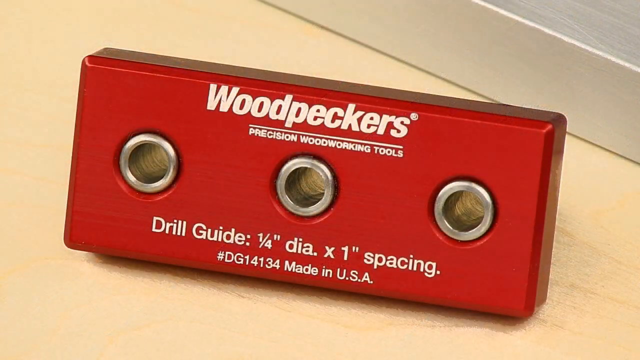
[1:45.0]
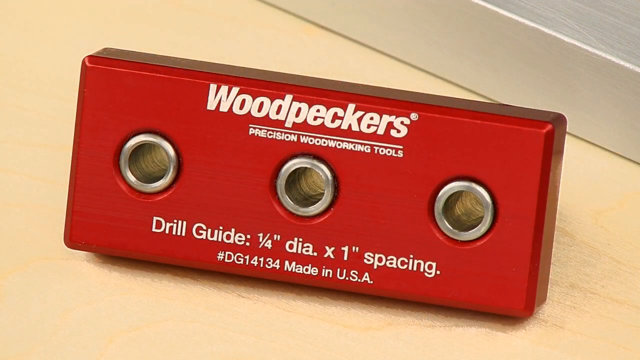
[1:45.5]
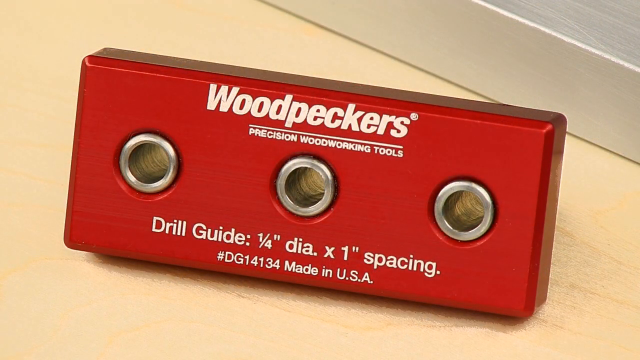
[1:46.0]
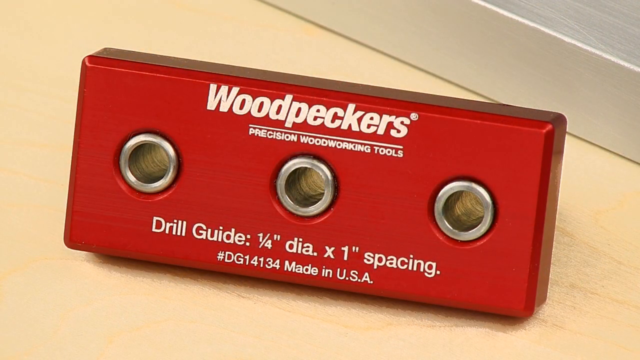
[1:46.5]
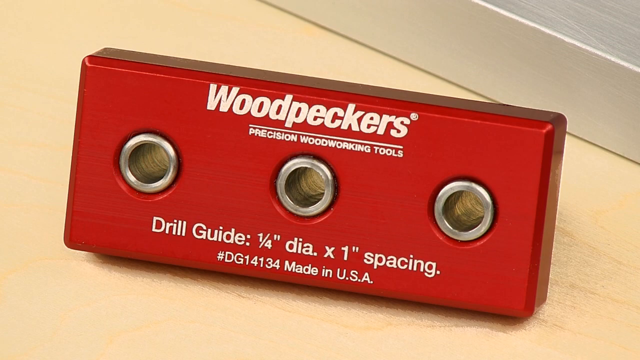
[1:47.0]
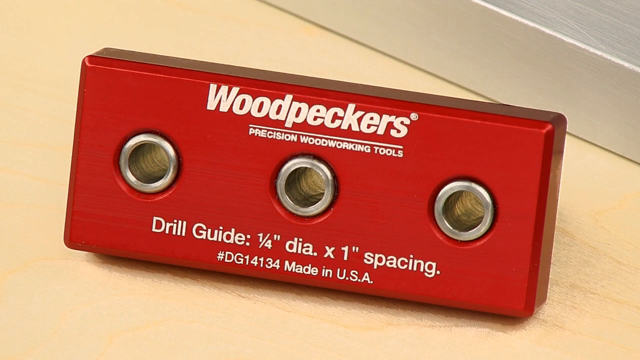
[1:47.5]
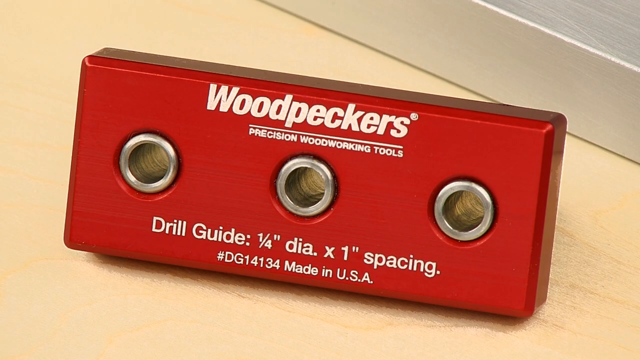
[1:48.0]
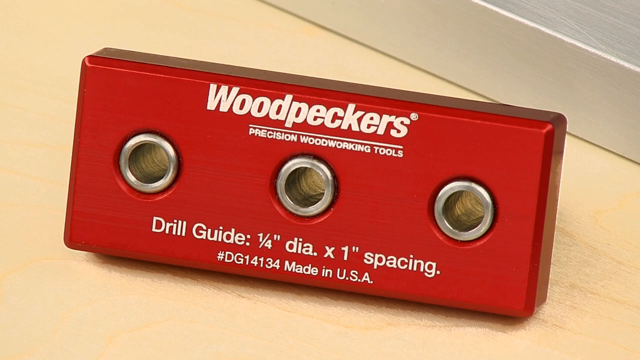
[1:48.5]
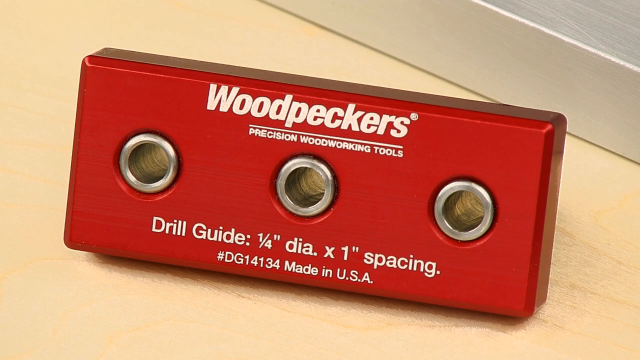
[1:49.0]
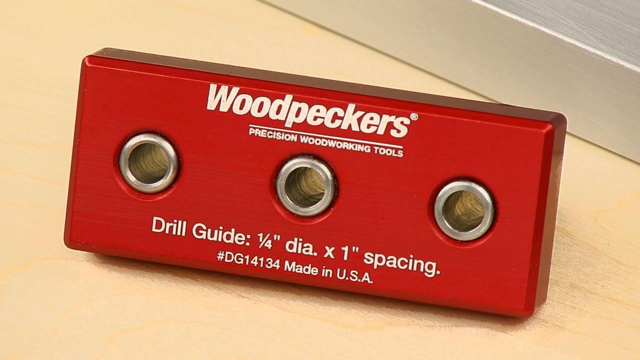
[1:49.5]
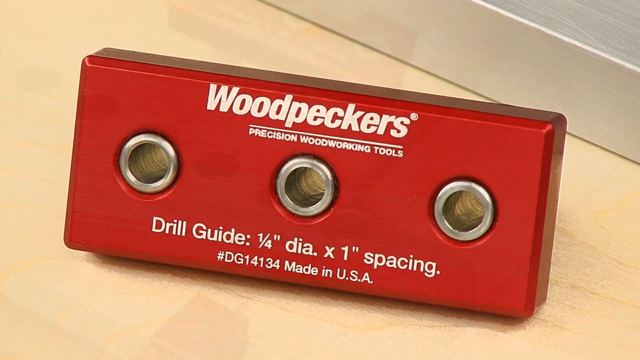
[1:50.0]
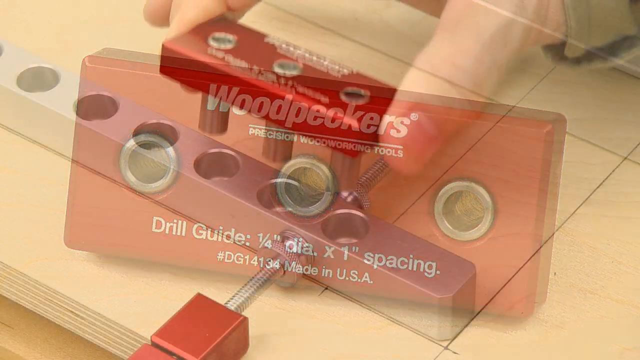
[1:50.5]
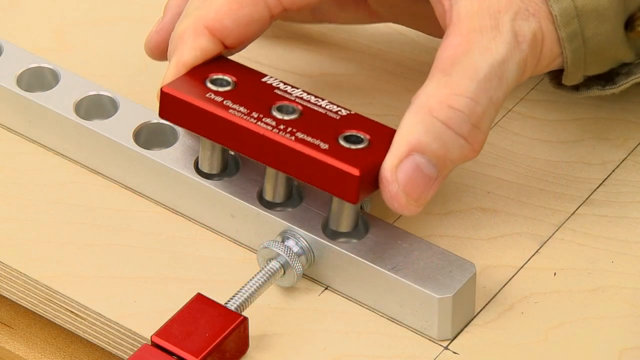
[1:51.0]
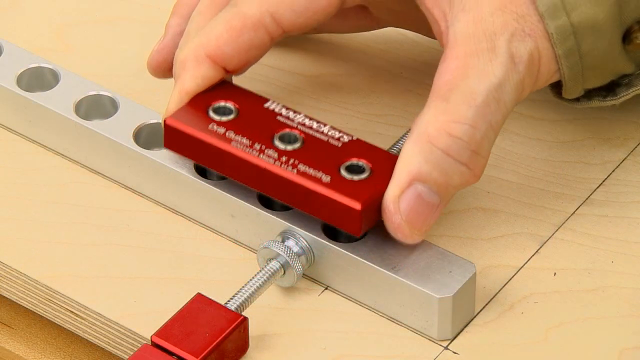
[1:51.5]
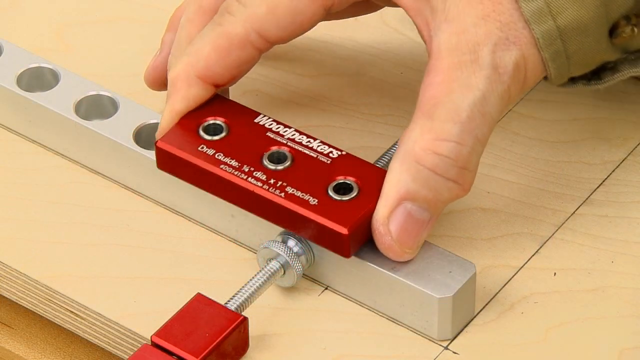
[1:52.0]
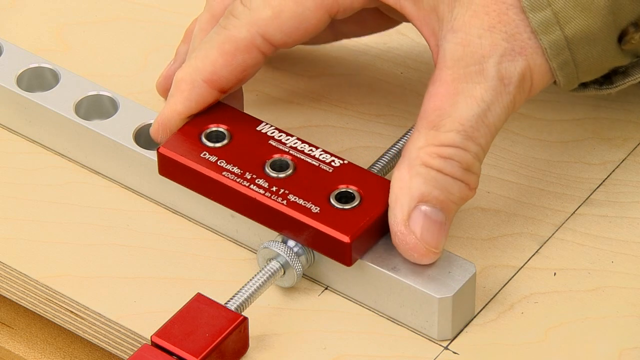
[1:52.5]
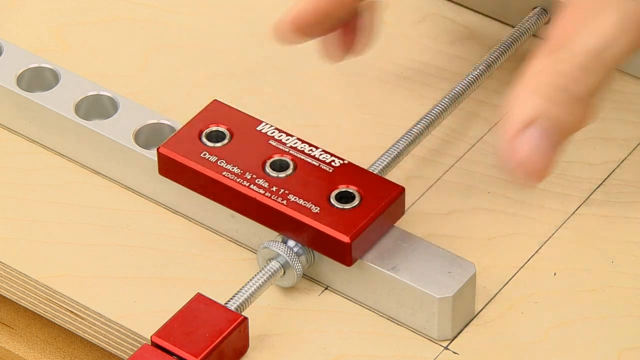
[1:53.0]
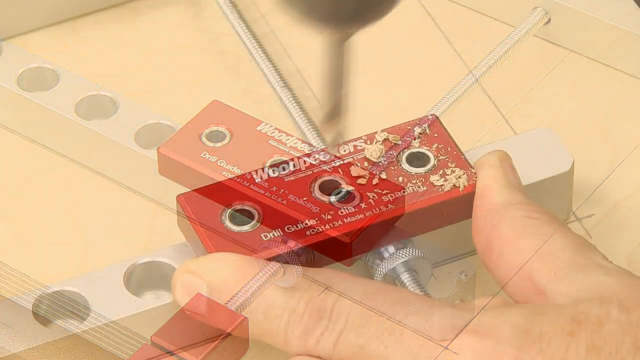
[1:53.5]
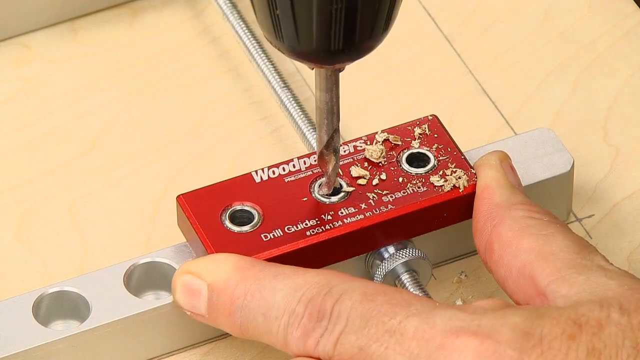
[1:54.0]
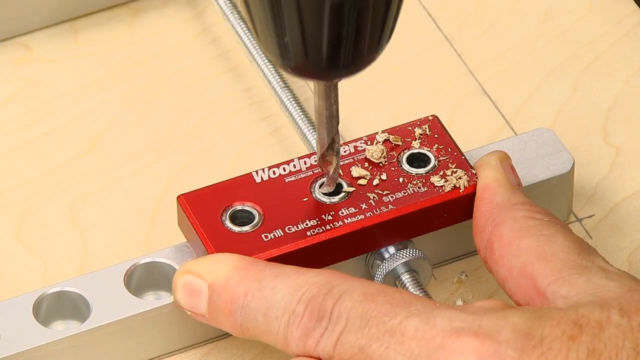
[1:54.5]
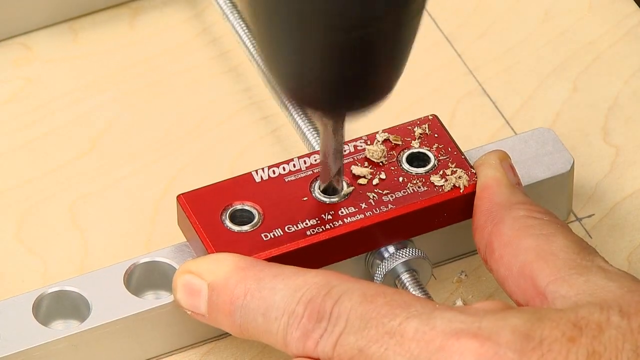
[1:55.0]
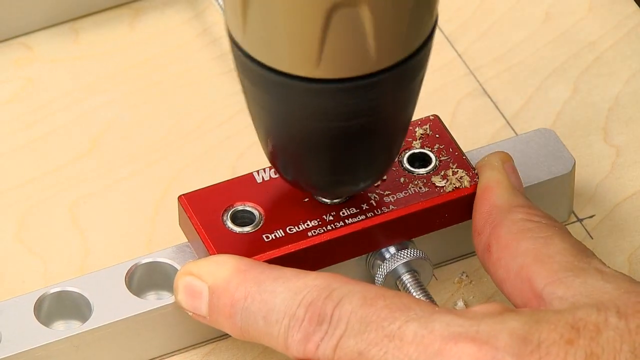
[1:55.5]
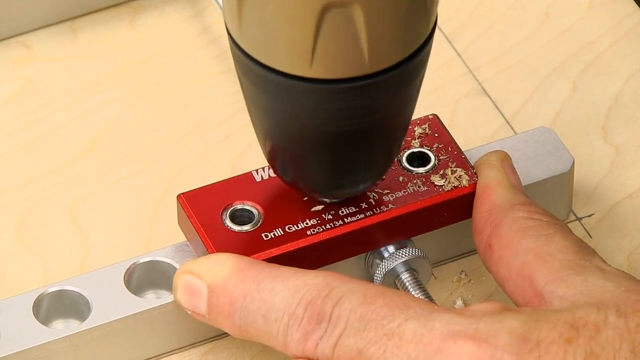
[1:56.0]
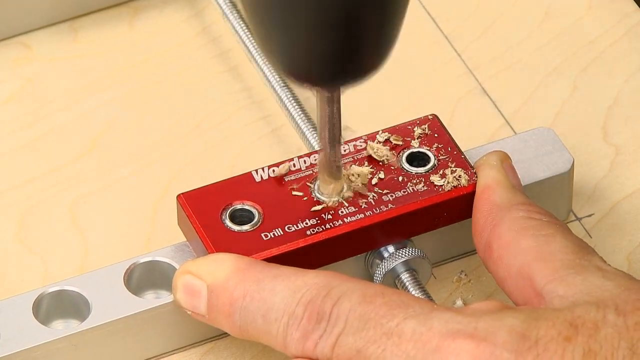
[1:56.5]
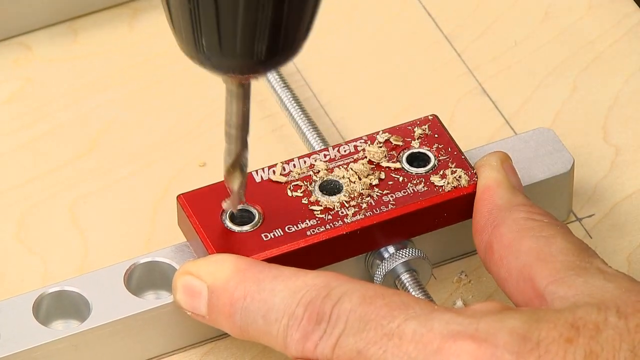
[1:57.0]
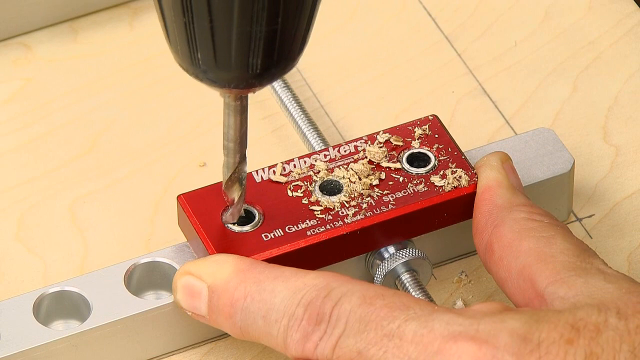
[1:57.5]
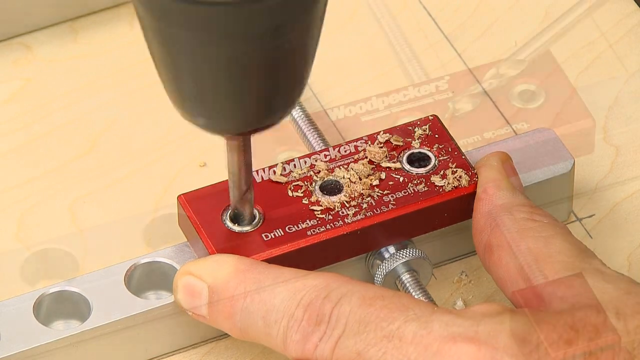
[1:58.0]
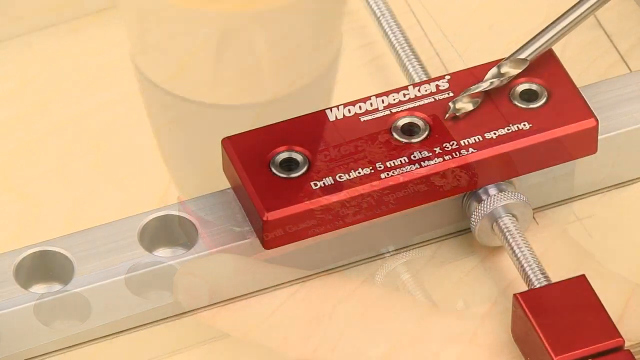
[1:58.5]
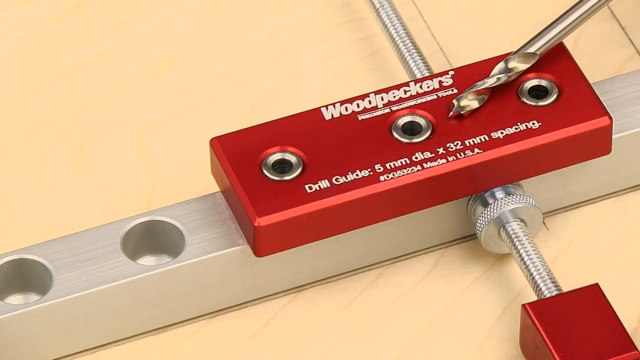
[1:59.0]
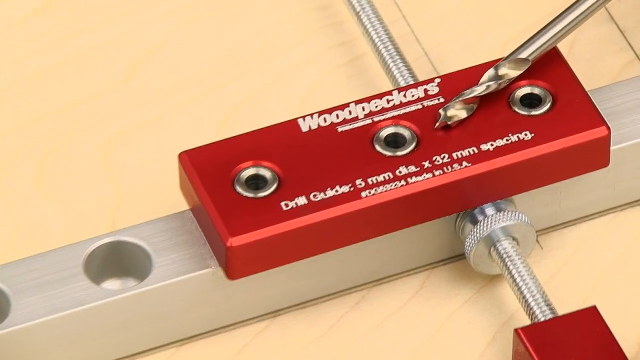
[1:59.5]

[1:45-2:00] The man has the larger piece out and puts the drill guide on top of the jig, showing how it fits into the larger jig. He drills down into the larger holes, and as he pulls out, sawdust comes back up and out. This is a third way to make holes with the jig; a spacing of 1 4th diameter by 1 inch is indicated. This drill guide is one piece of red metal with three holes, so it has to be moved along: he drills three, moves it along, and drills three more, placing it and drilling down into it. It is then shown again without him moving it, with red where the jig is.